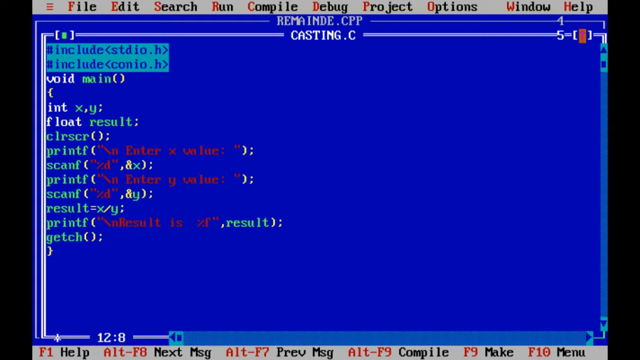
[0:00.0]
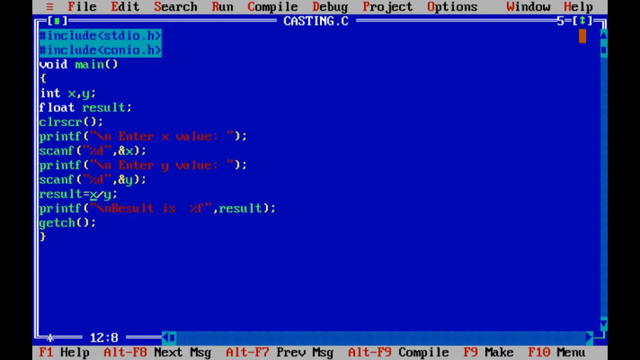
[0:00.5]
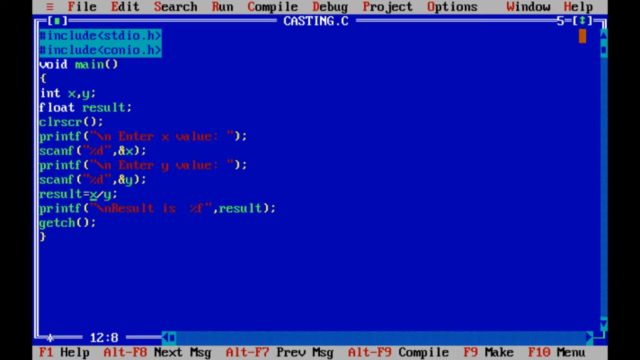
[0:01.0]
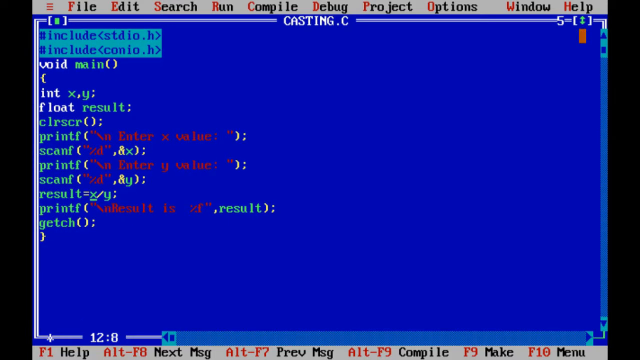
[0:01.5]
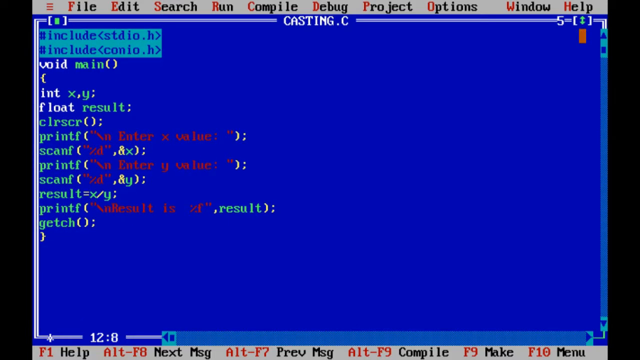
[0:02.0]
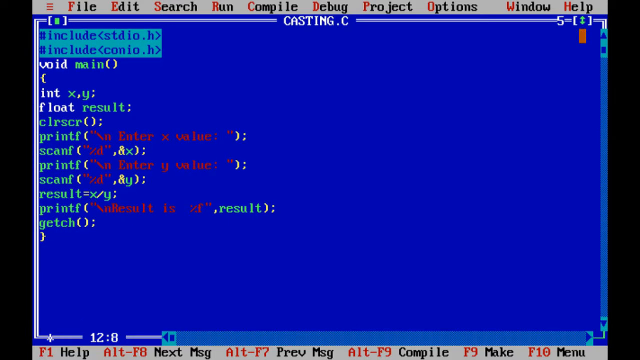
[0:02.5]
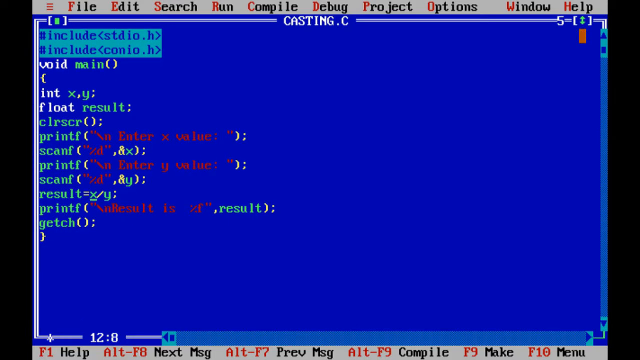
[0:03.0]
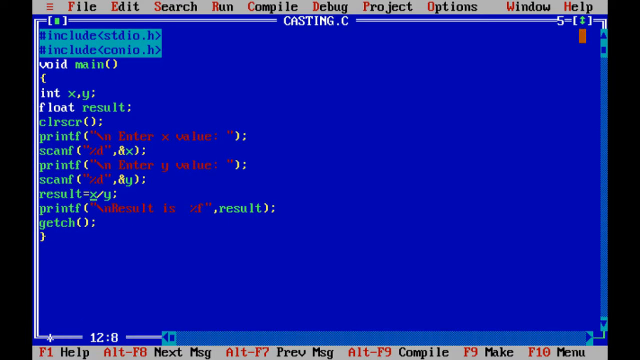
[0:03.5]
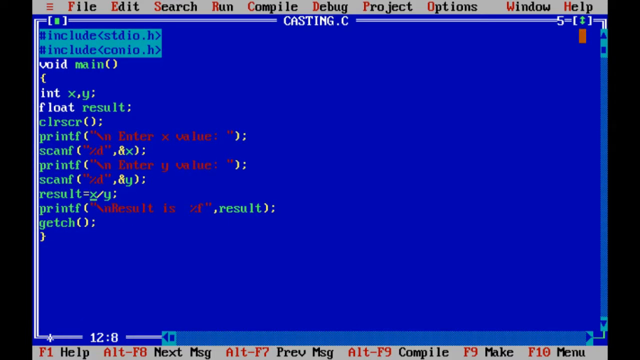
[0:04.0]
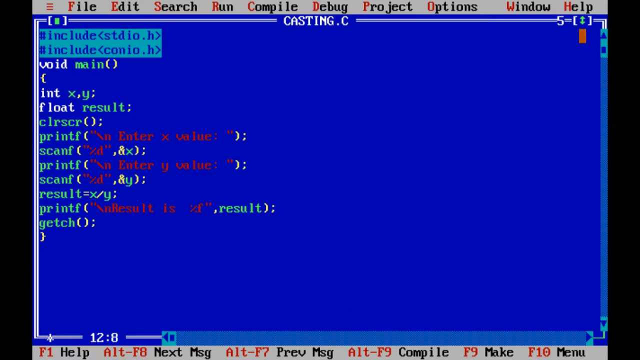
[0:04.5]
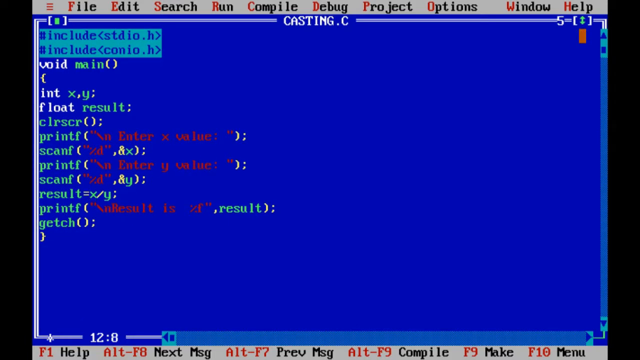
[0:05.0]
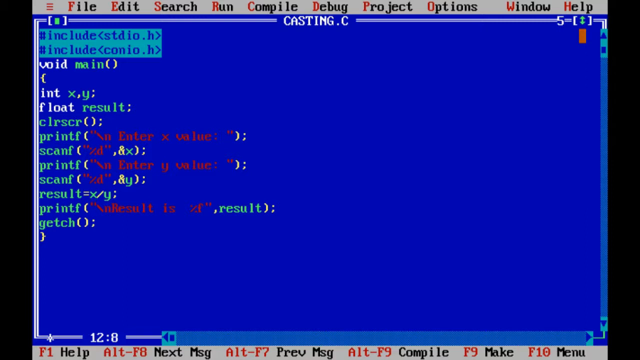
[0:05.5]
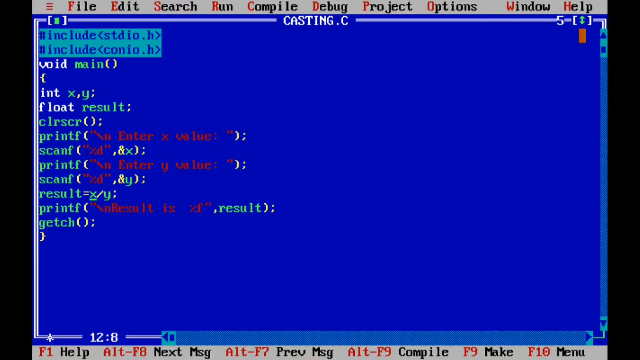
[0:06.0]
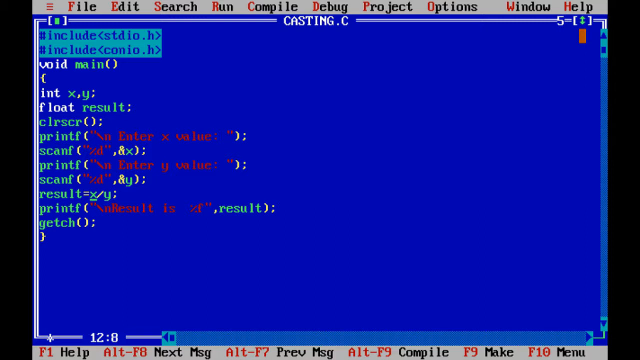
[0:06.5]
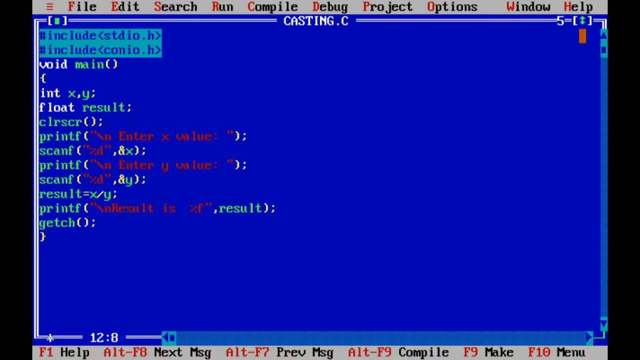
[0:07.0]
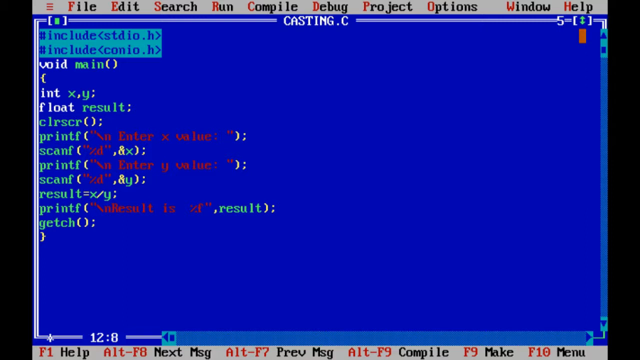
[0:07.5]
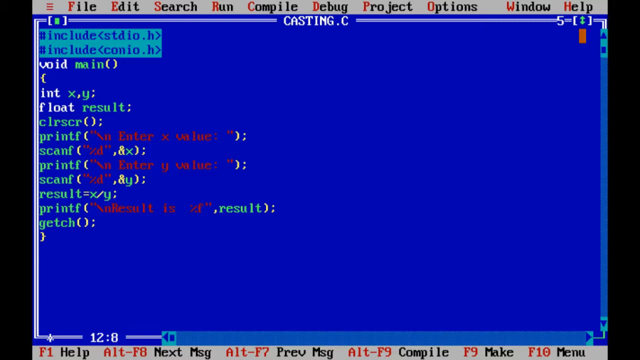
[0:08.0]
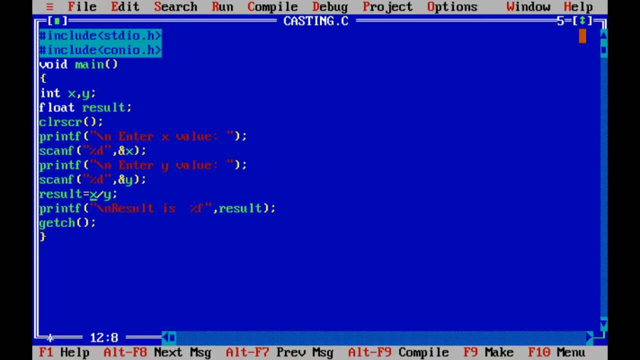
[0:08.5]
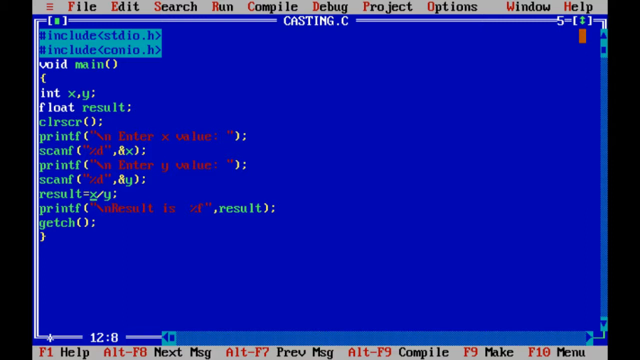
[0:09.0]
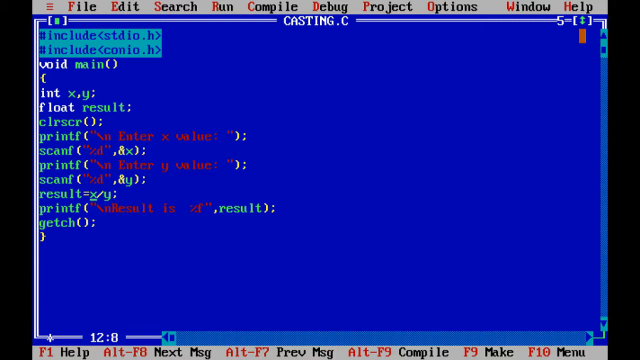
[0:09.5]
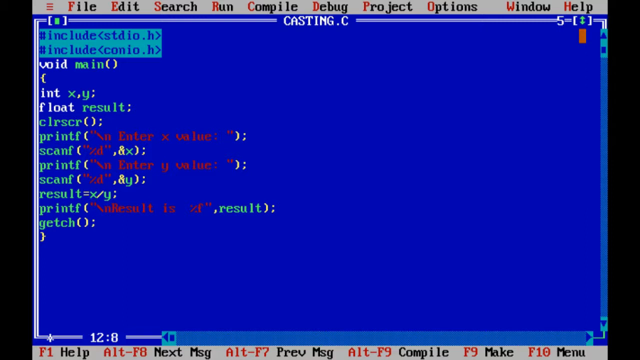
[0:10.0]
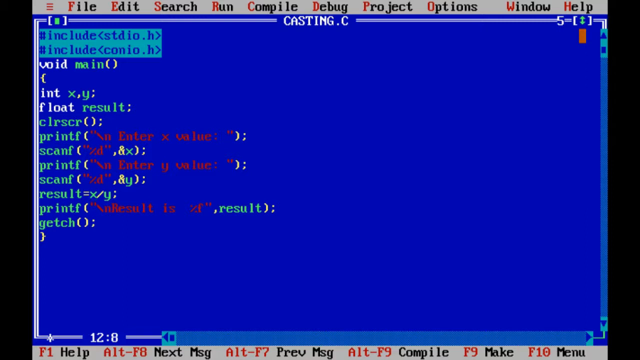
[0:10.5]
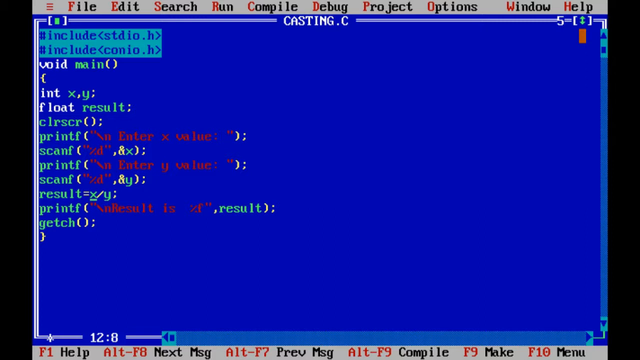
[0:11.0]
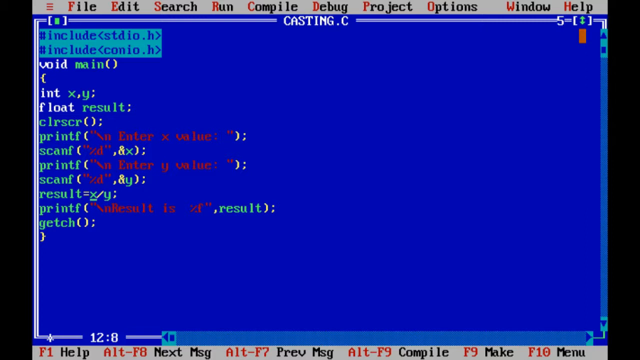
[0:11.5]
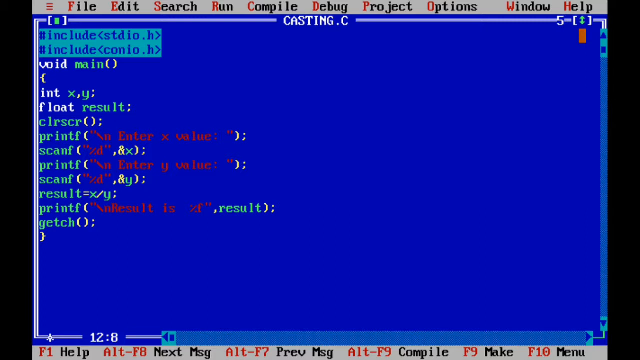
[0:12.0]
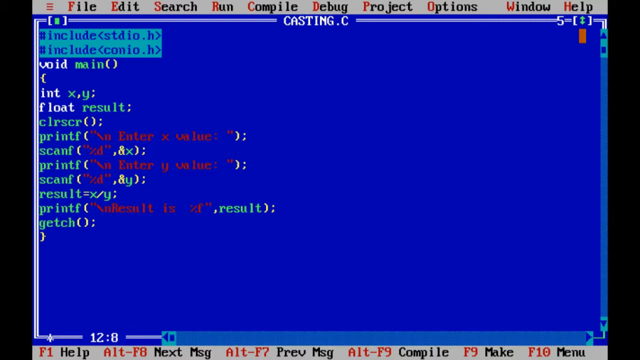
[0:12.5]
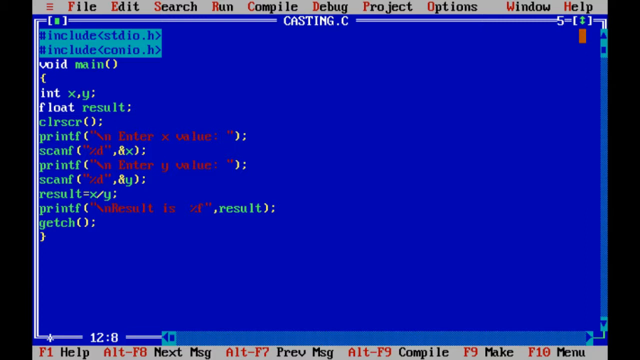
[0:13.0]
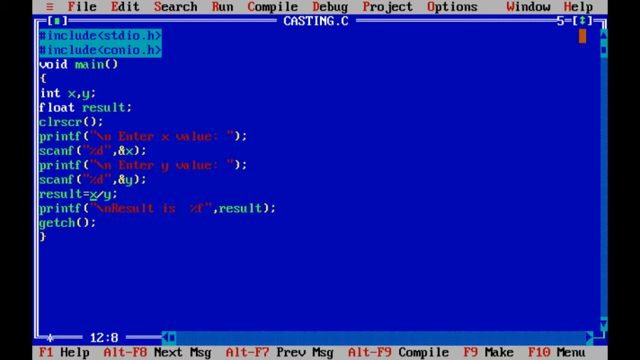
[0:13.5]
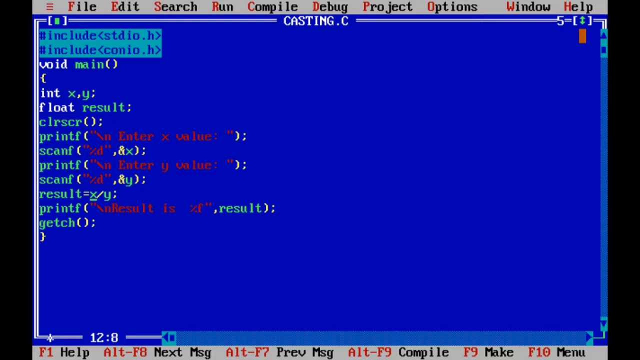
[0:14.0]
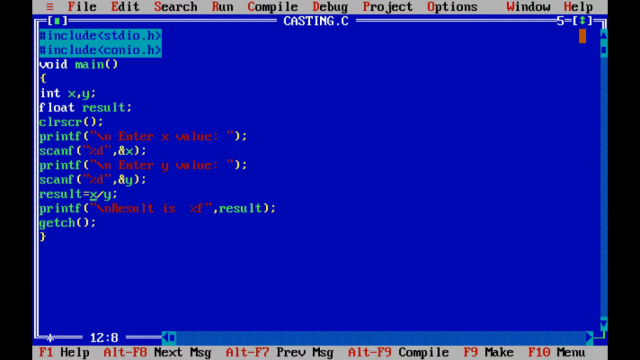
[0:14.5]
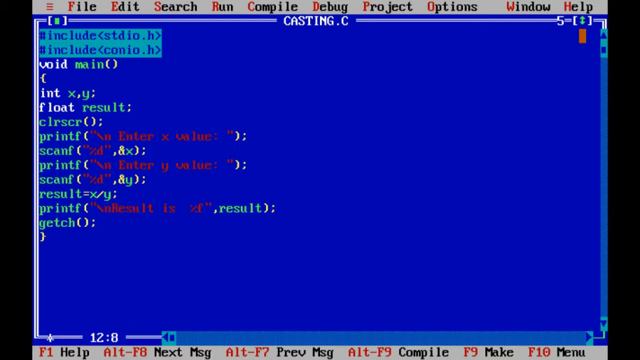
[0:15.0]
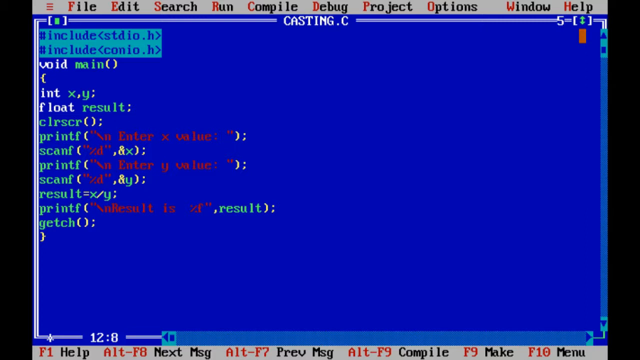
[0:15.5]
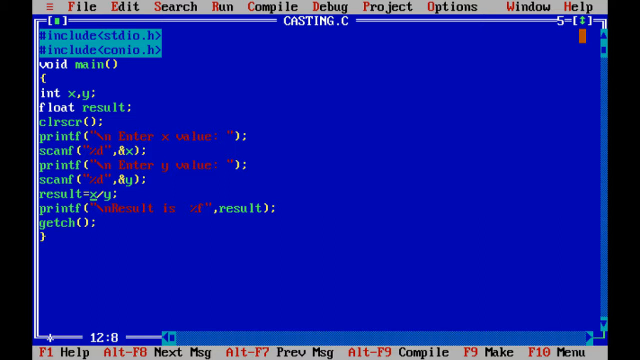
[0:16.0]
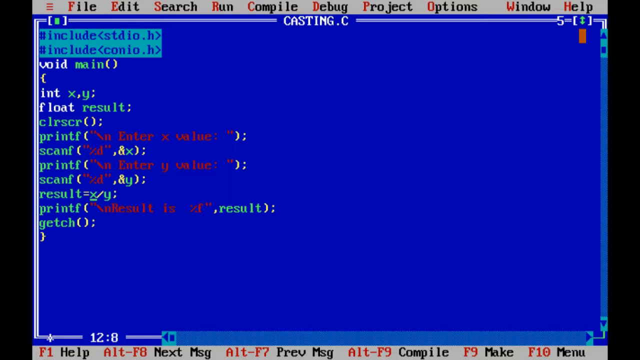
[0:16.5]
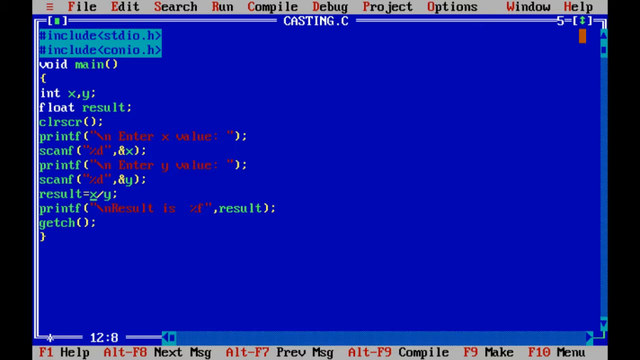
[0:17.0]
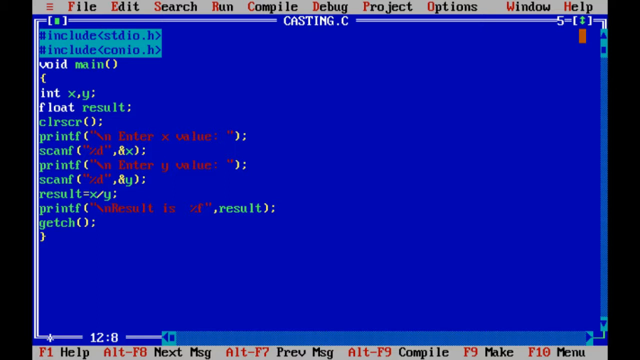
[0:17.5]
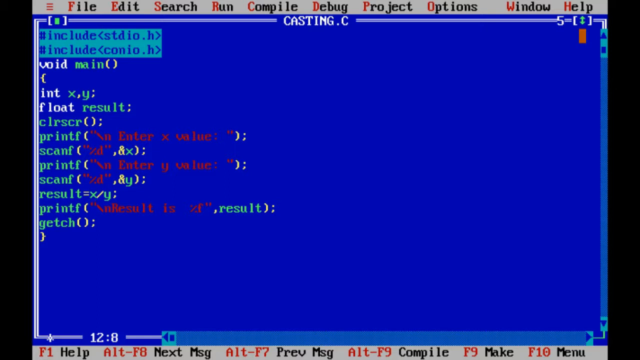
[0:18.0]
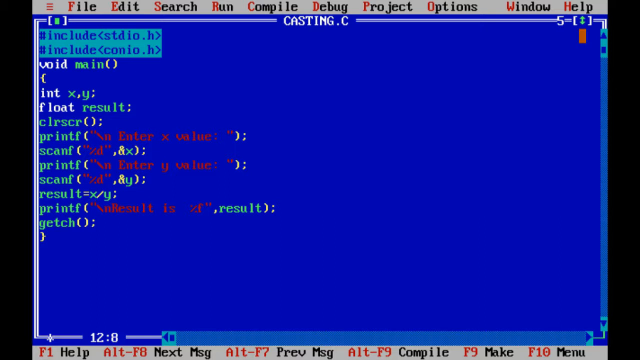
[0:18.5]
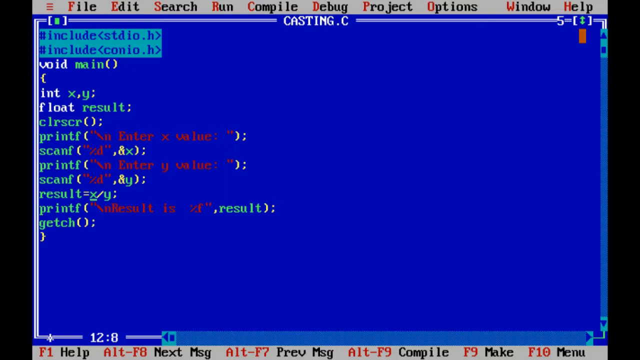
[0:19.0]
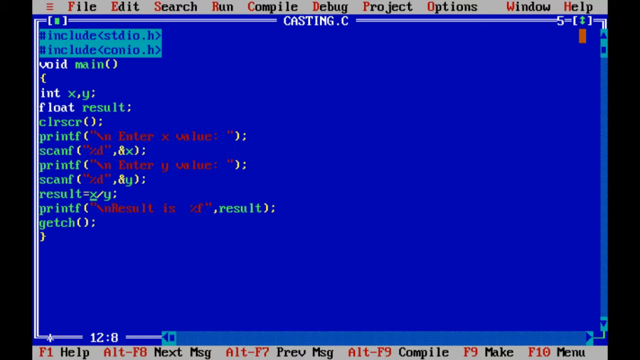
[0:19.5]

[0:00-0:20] A computer screen shows an IDE, an integrated development environment, in a fairly old-school style, maybe from the 2000s. There is no motion apart from the cursor, and the screen appears static. The window has a blue background and a grey header with control options written in black text, each with its first letter in red: file, edit, search, run, compile, debug, project, options, window and help. The blue window is titled "casting.c". It contains about 13 lines of code, likely C, showing a void main function, written in four colours: white, light blue, red and yellow. The only motion is a flickering underline cursor on line 10, under the x in the line "result=x/y;".